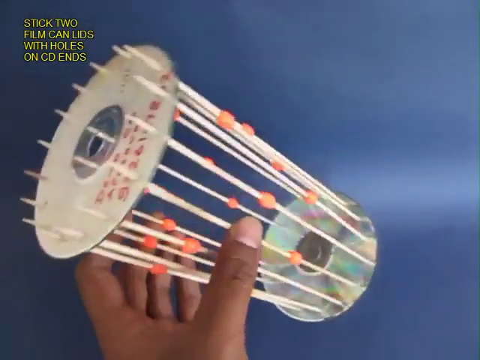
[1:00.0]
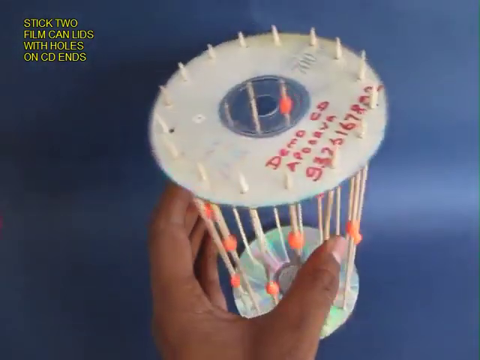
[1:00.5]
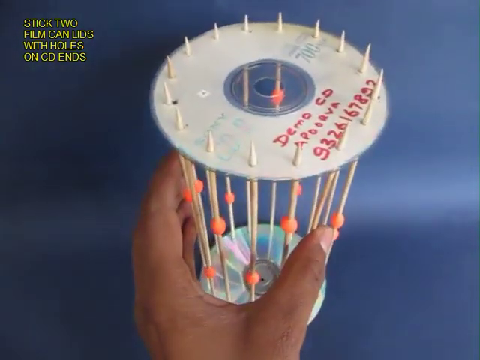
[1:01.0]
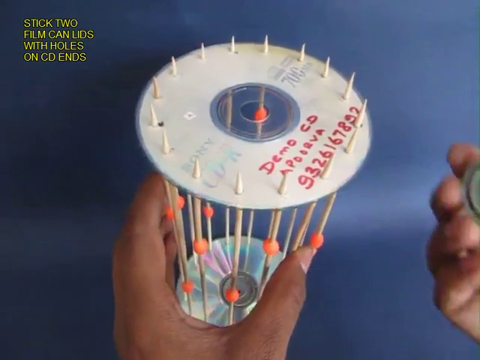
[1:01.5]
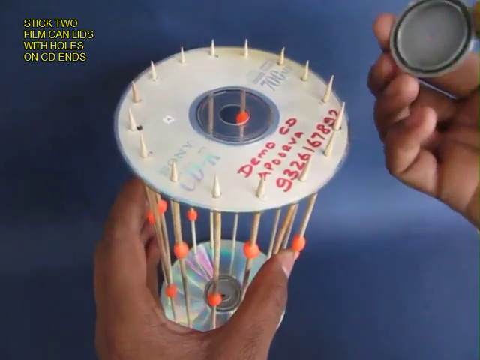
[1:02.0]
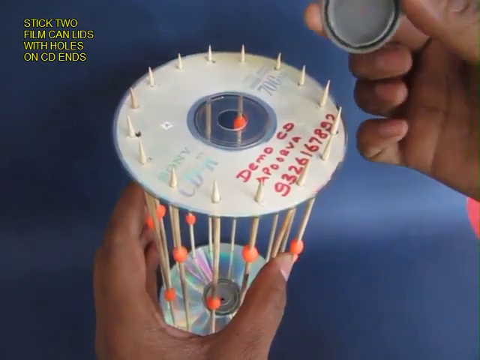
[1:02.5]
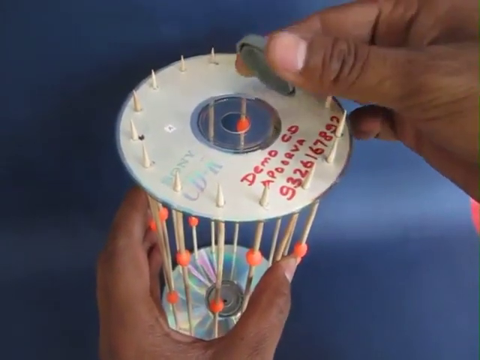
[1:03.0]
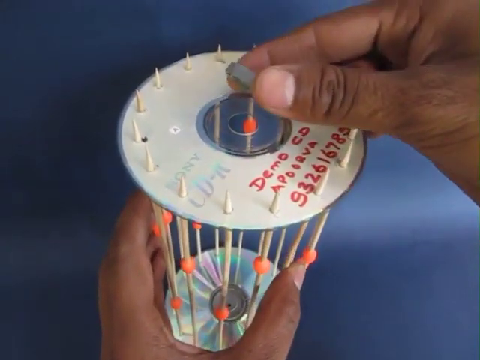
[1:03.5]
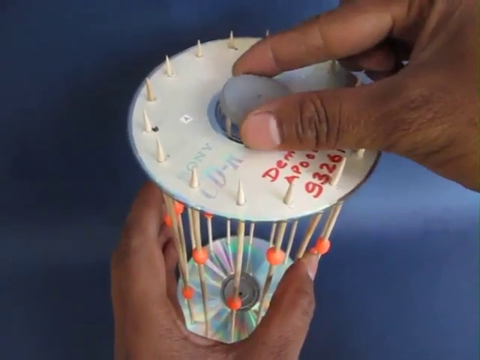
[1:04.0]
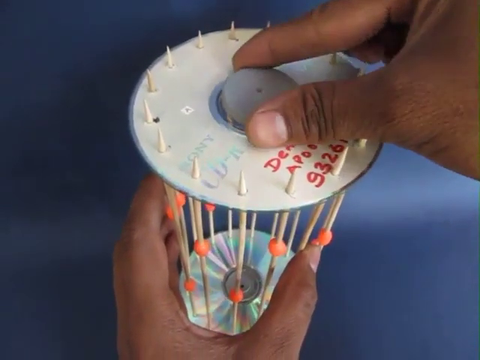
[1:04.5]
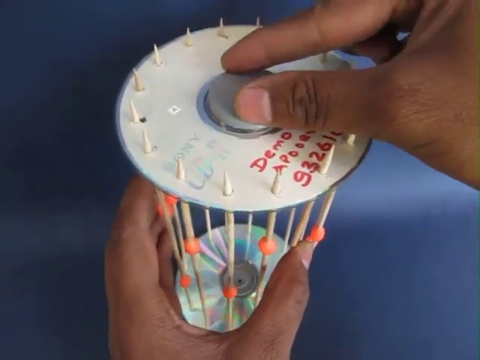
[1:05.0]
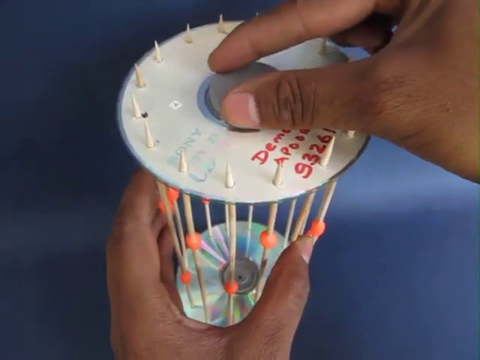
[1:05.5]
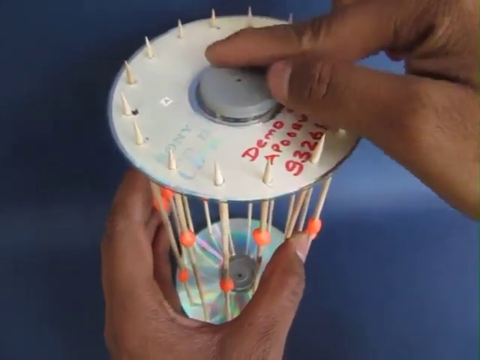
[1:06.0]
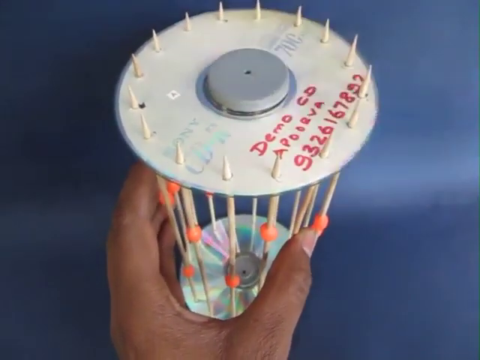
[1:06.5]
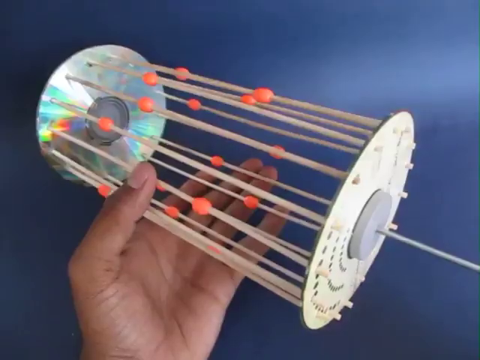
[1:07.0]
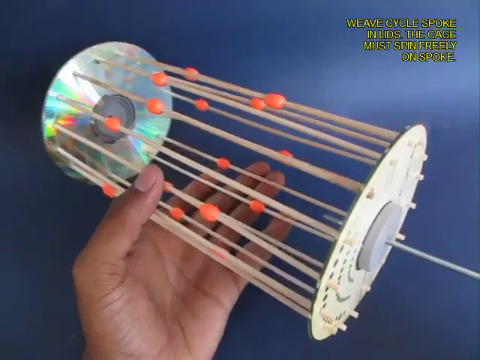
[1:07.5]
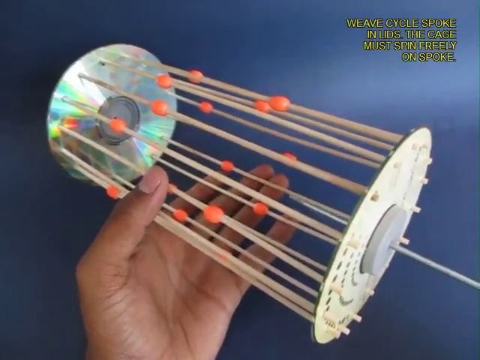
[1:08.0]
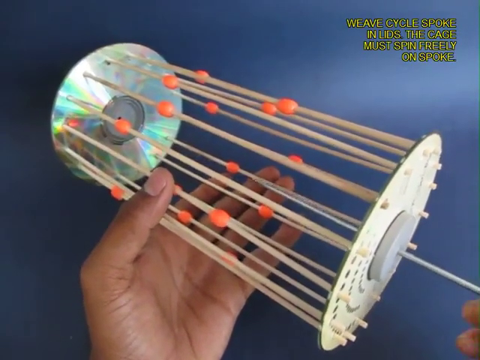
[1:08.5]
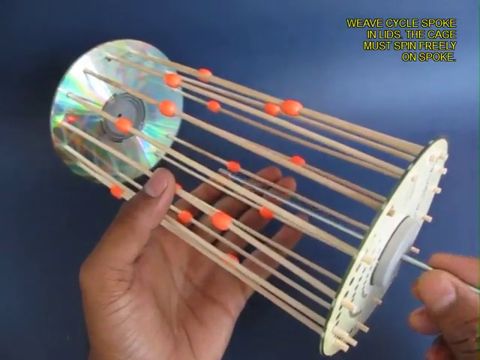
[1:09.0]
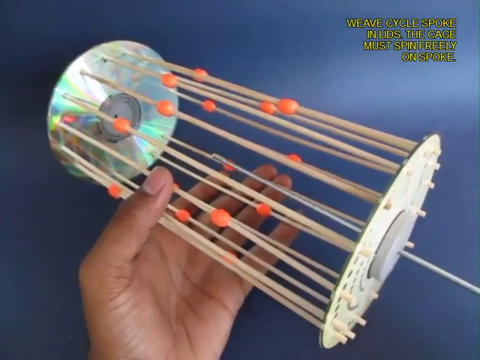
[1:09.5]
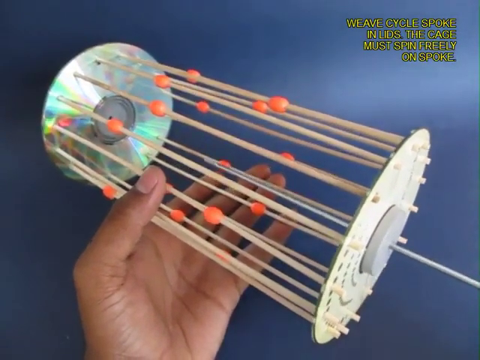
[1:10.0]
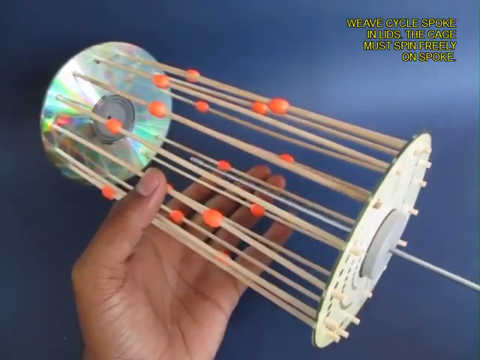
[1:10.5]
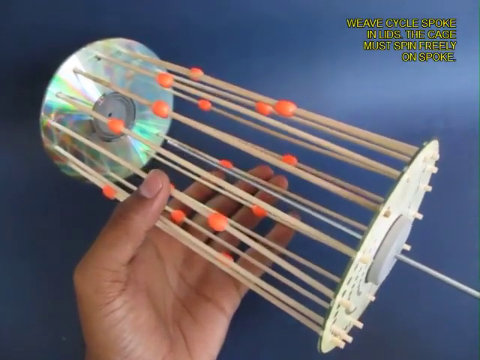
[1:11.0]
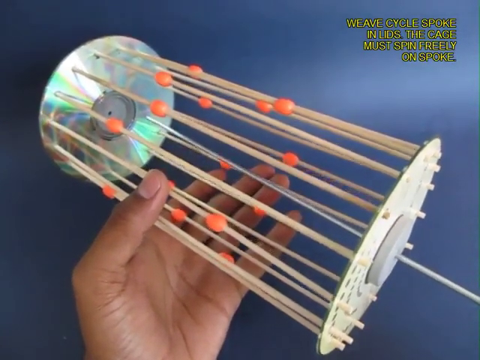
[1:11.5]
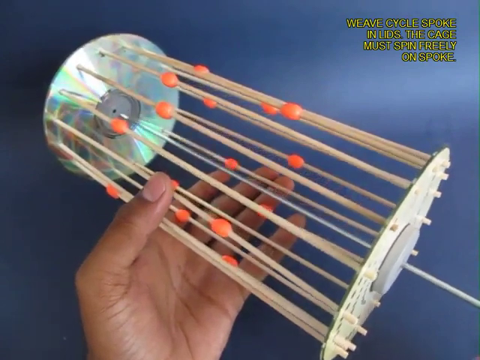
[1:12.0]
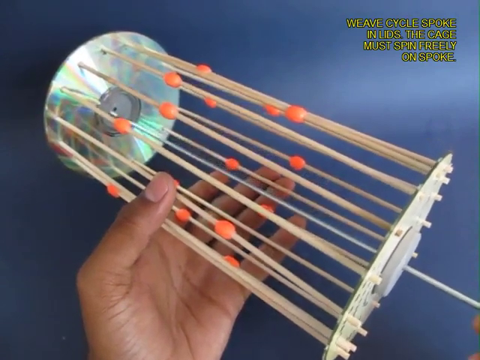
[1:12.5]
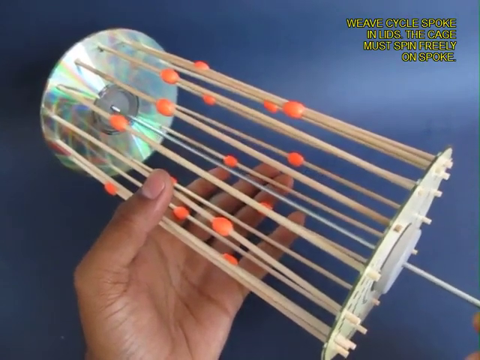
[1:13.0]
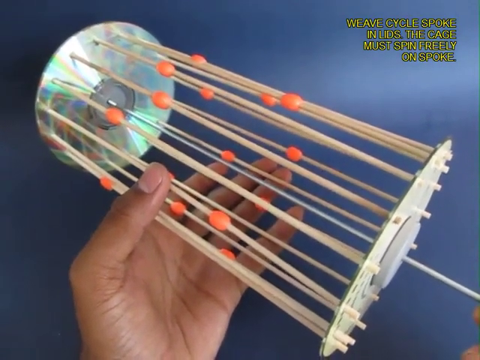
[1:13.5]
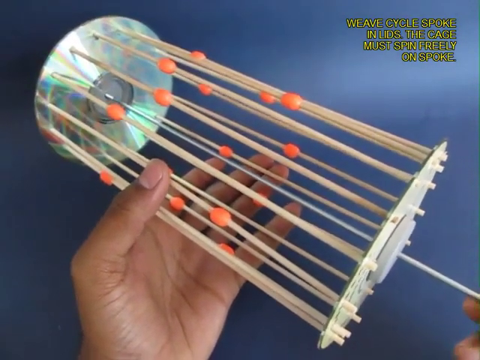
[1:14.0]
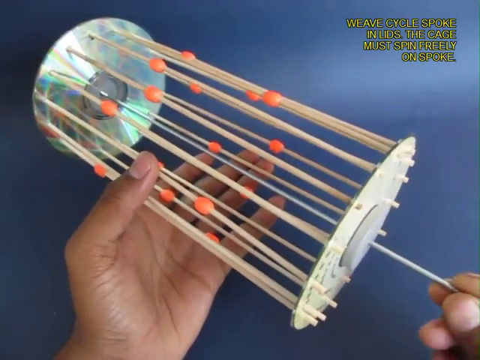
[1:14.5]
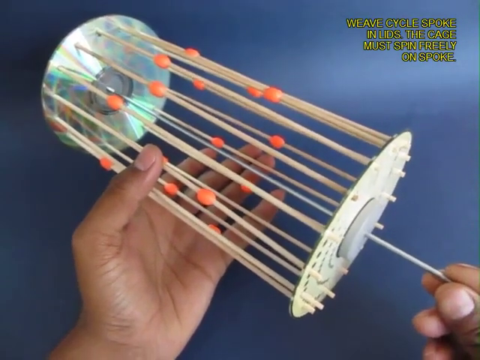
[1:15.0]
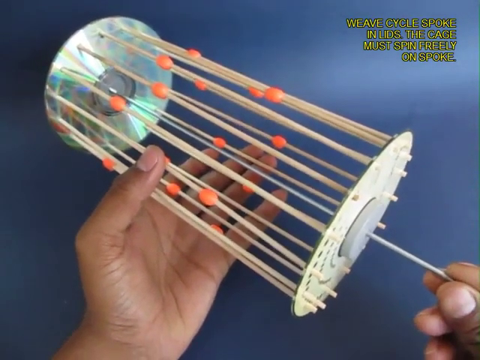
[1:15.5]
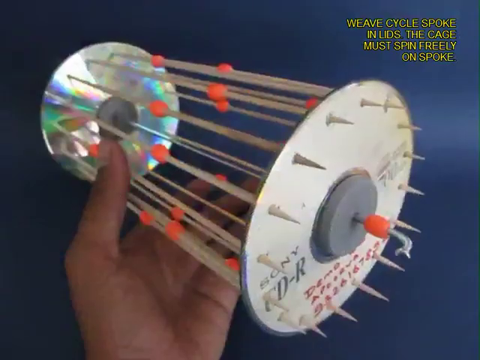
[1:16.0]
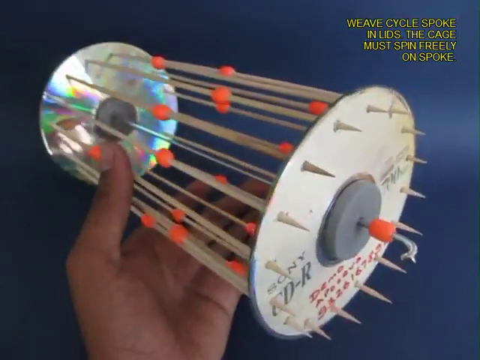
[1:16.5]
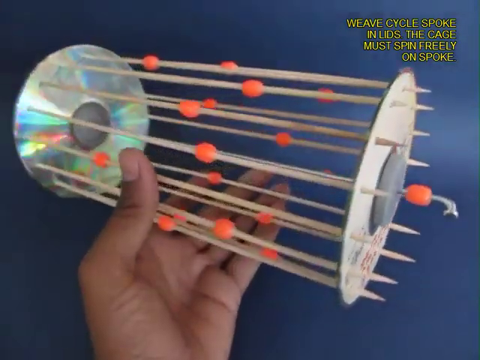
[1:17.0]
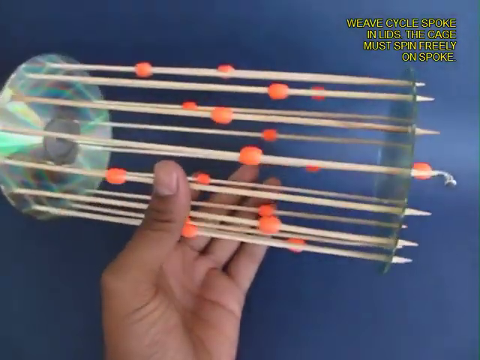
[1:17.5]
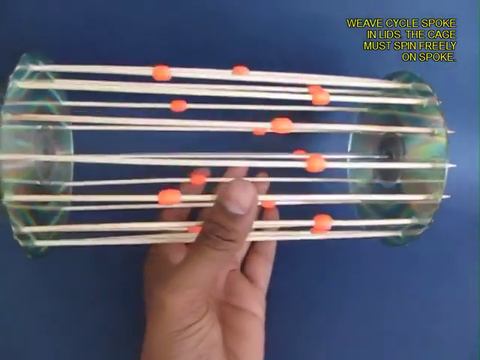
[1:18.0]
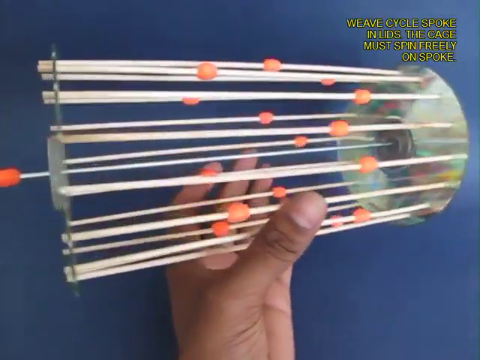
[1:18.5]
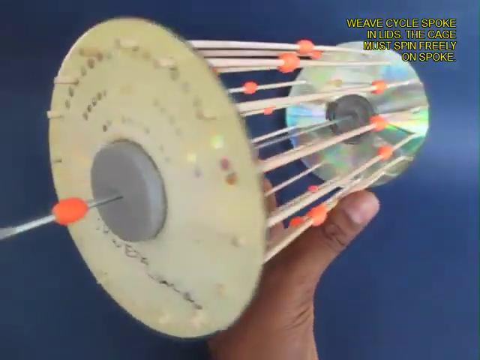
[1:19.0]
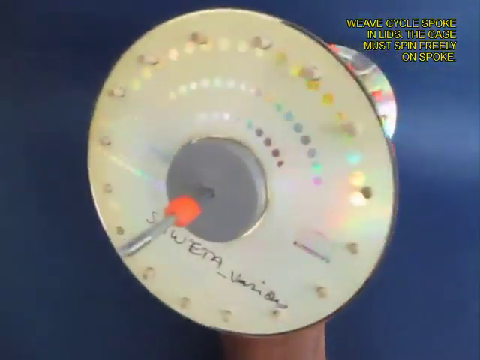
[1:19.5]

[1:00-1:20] Against a navy blue background, the teacher's hand holds up the dynamic wave model. He rotates it slowly to show the CDs, the 16 skewers and the orange beads, then shows one of its ends, where a pointy skewer sticks out. He adds more glue to a cap and presses it down so that the bottle caps stick to the CDs. He then inserts a long rod through the CD holes and the hole in the bottle cap, and it passes through to the other side and into the other CD with its bottle cap. A bead is placed on the top of the metal skewer so that it stays together. The teacher rotates the tube again to show it from all angles.